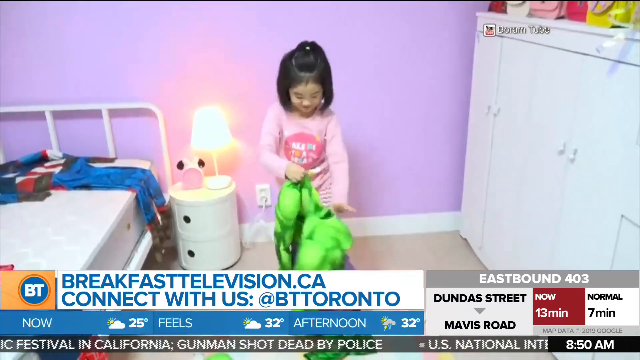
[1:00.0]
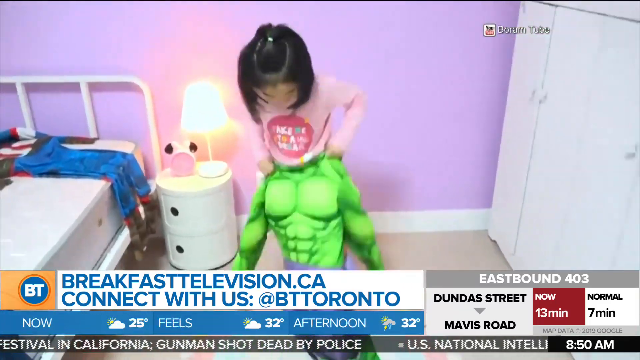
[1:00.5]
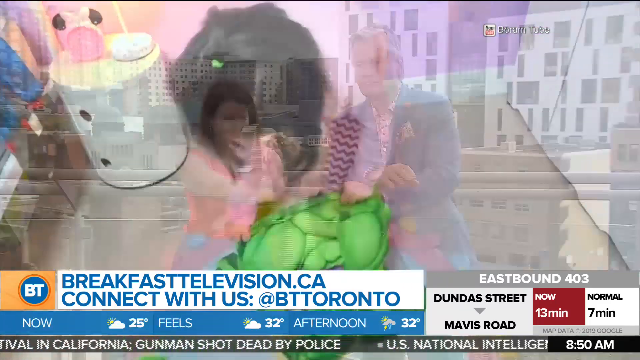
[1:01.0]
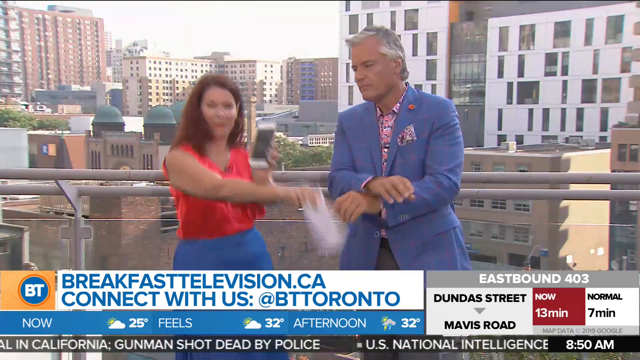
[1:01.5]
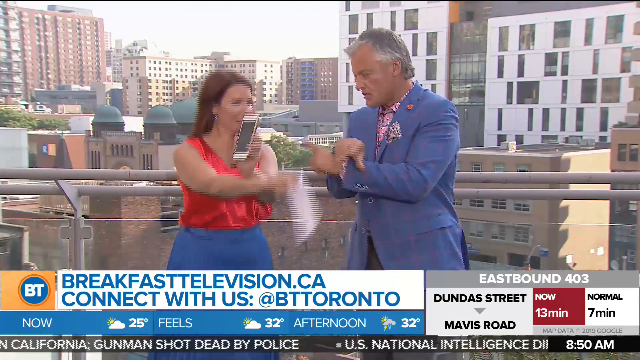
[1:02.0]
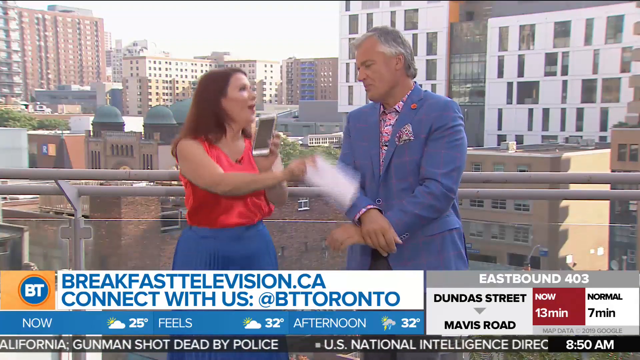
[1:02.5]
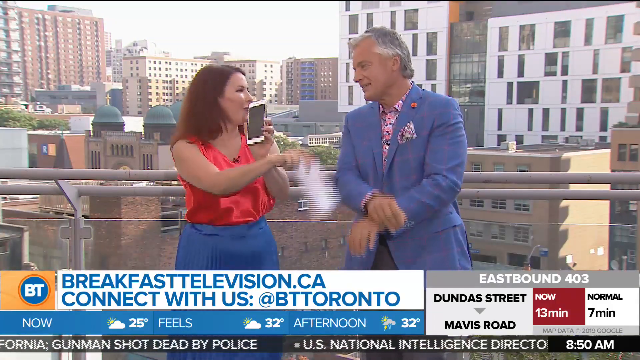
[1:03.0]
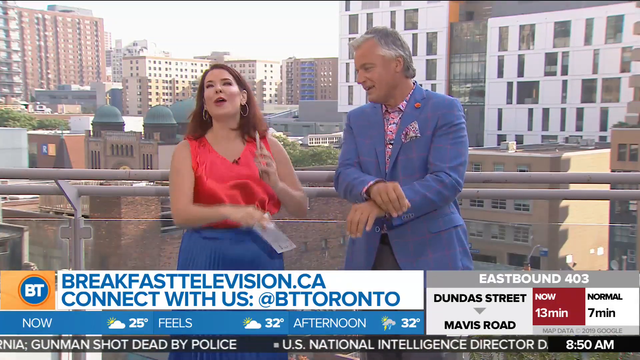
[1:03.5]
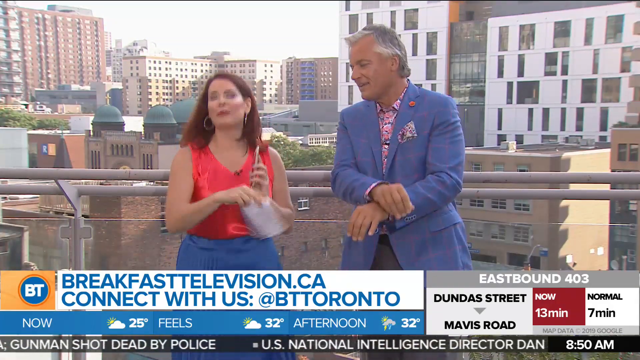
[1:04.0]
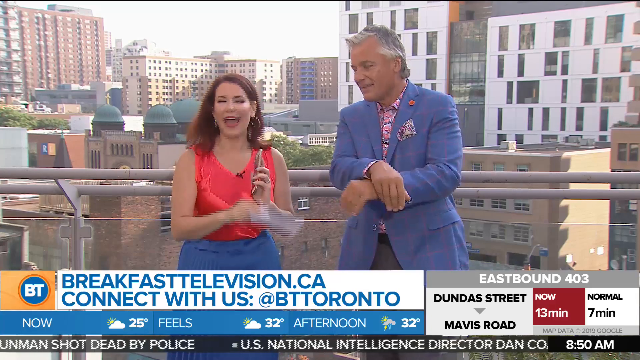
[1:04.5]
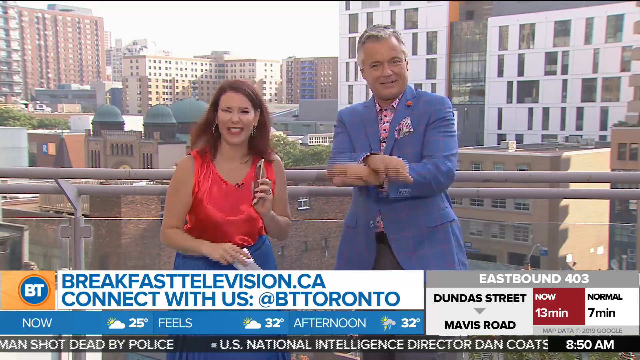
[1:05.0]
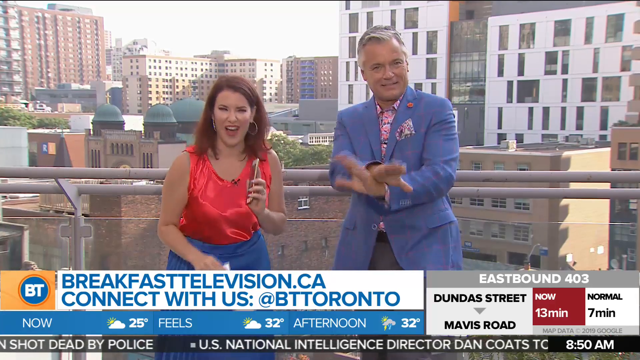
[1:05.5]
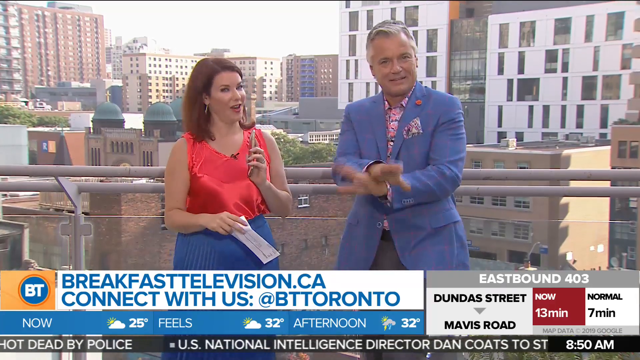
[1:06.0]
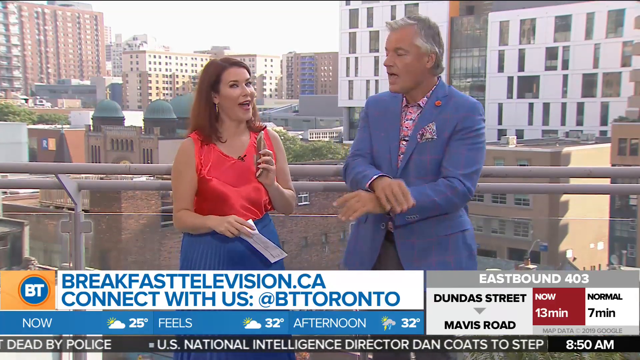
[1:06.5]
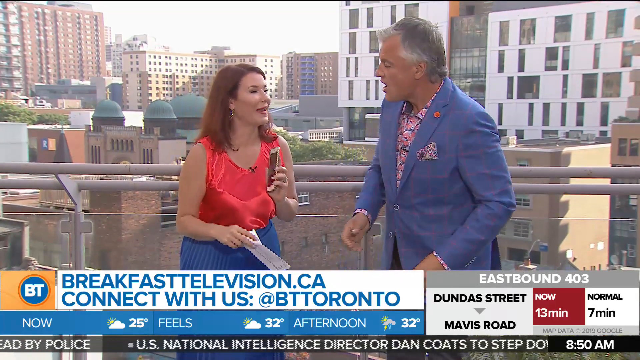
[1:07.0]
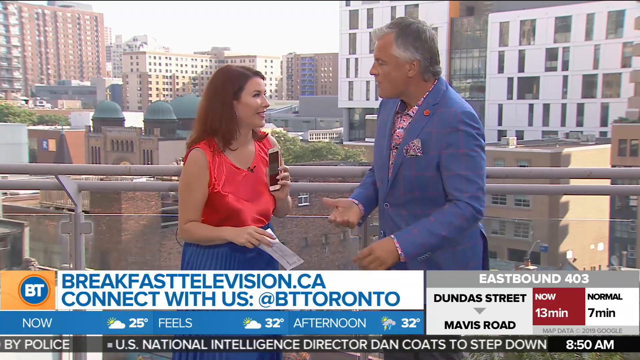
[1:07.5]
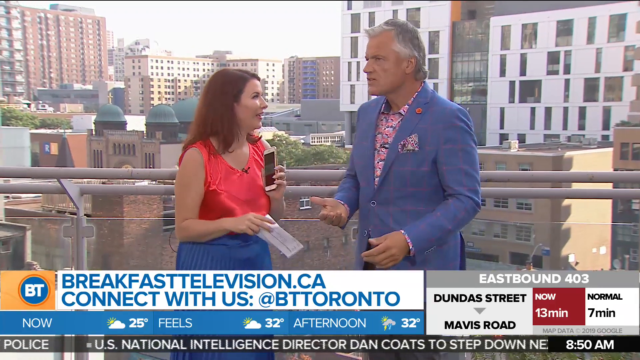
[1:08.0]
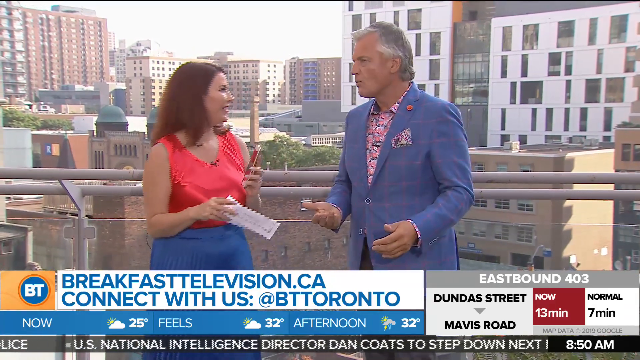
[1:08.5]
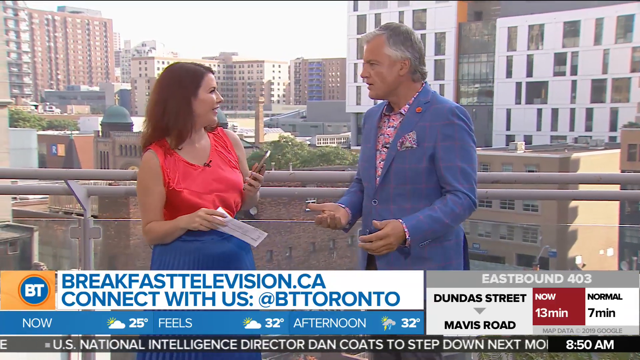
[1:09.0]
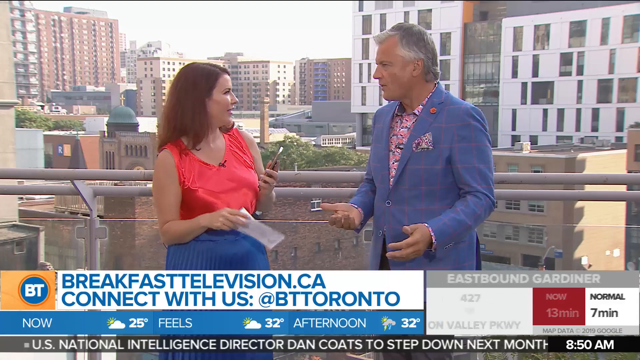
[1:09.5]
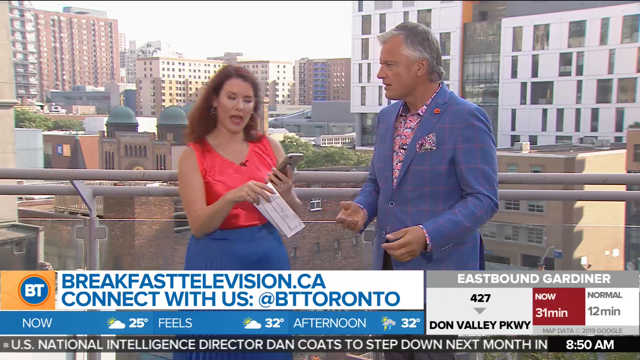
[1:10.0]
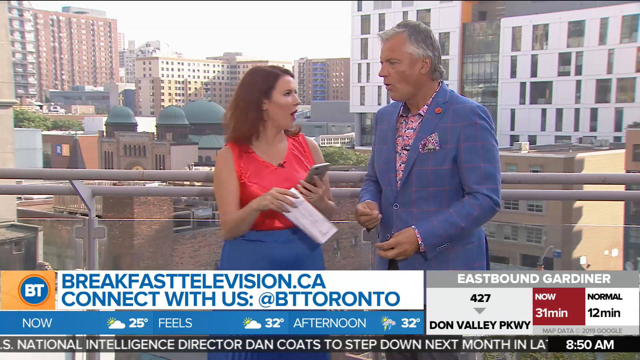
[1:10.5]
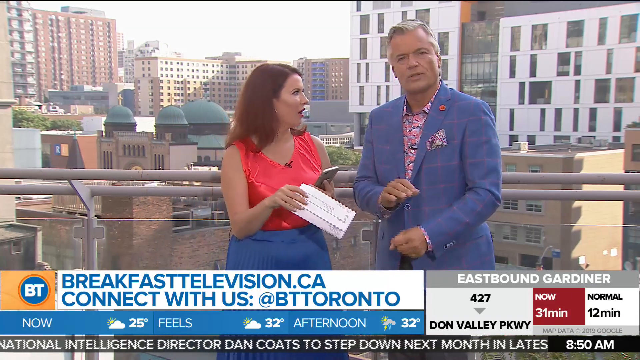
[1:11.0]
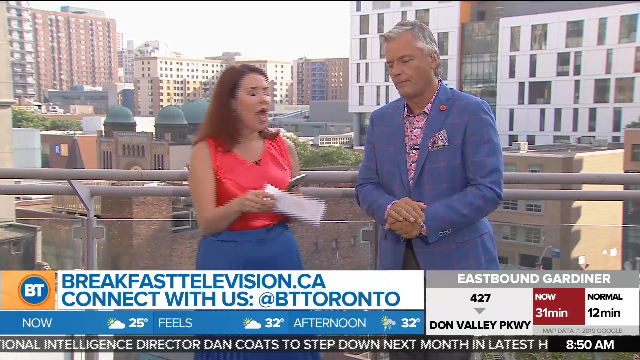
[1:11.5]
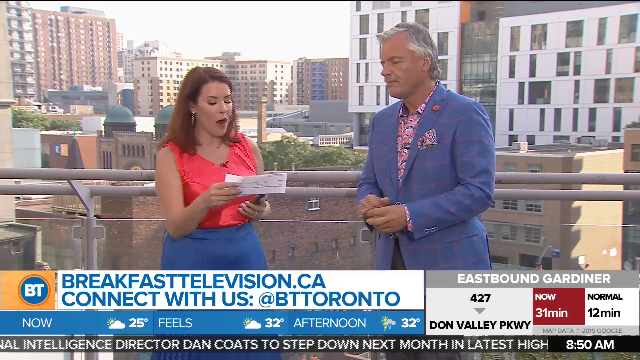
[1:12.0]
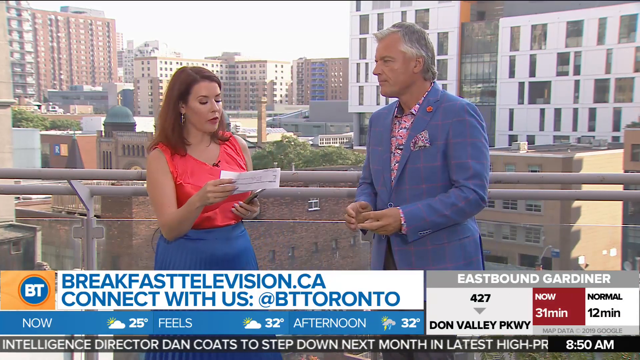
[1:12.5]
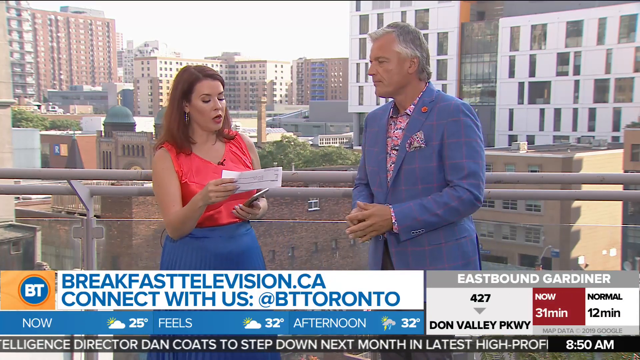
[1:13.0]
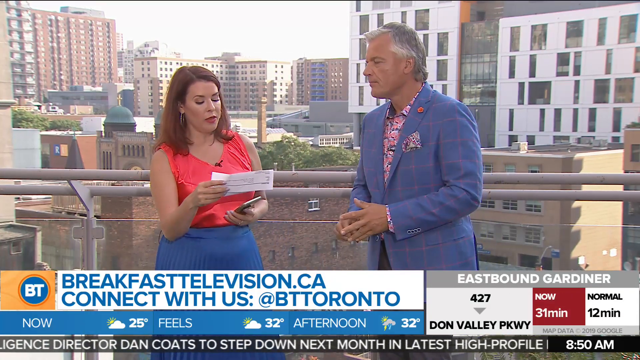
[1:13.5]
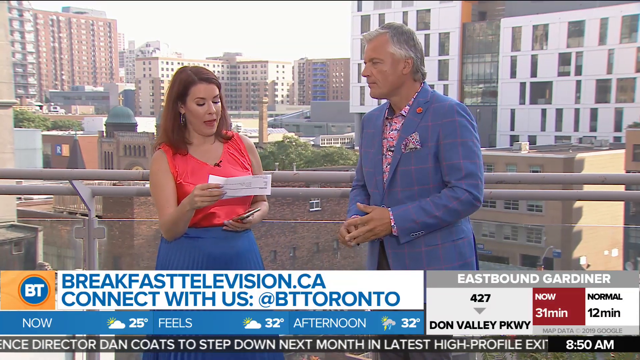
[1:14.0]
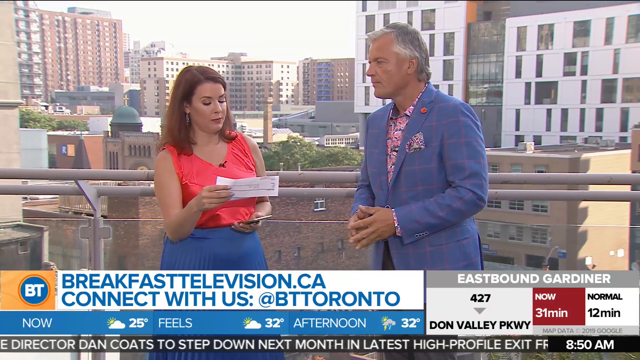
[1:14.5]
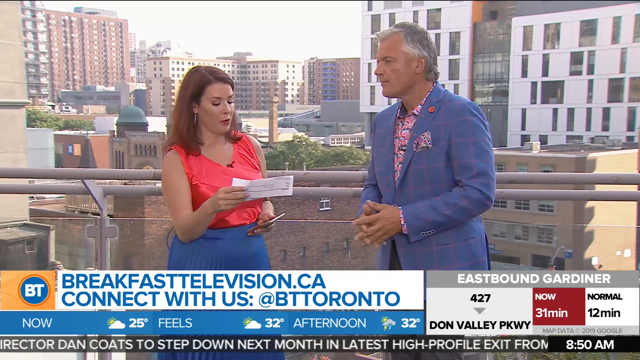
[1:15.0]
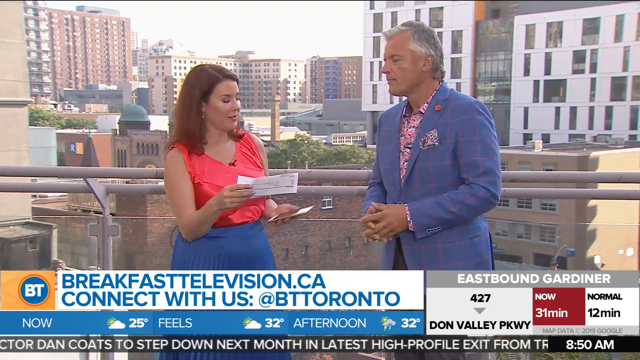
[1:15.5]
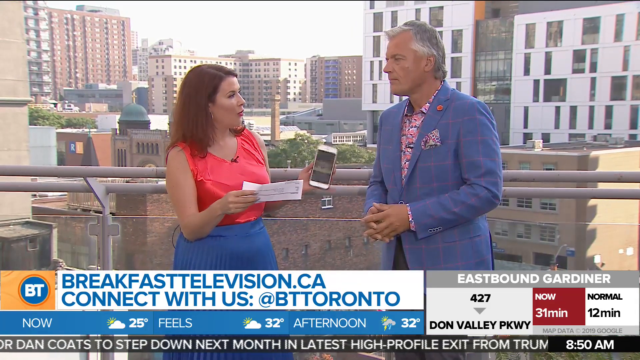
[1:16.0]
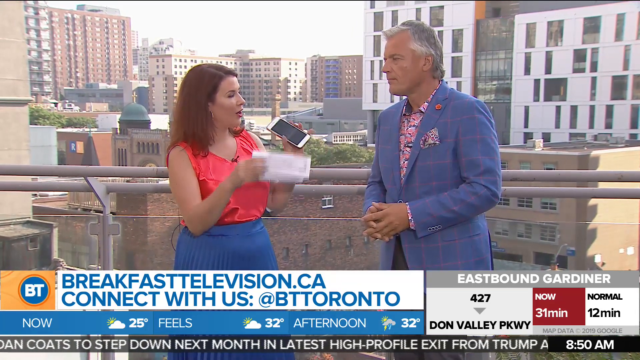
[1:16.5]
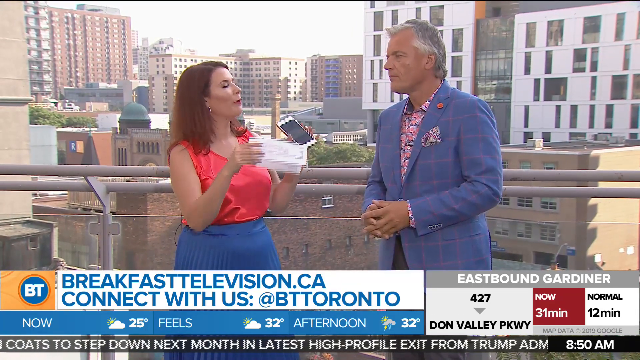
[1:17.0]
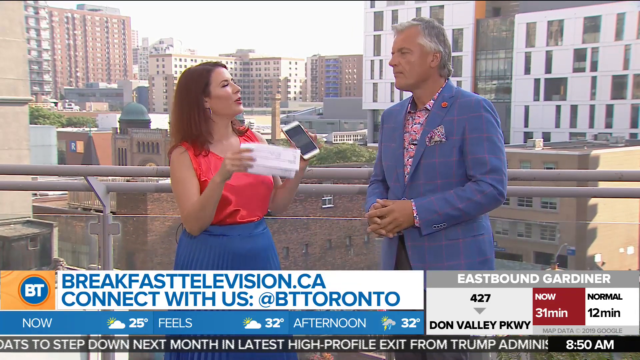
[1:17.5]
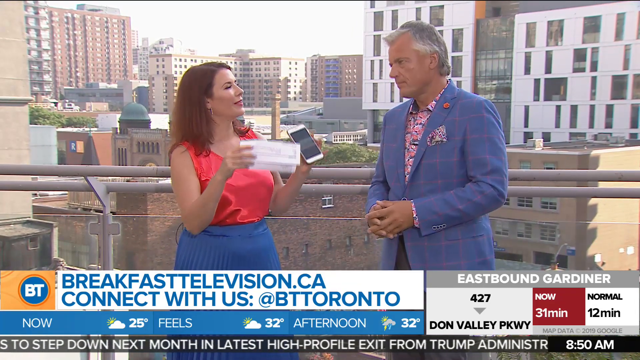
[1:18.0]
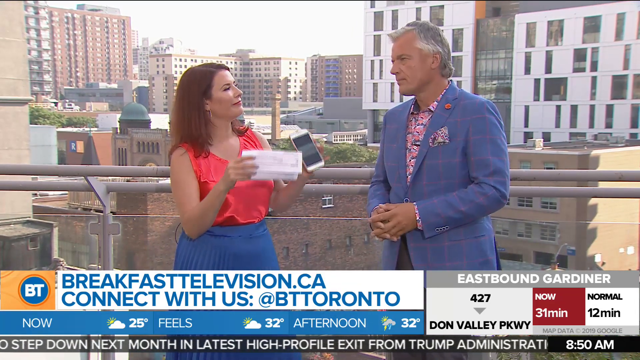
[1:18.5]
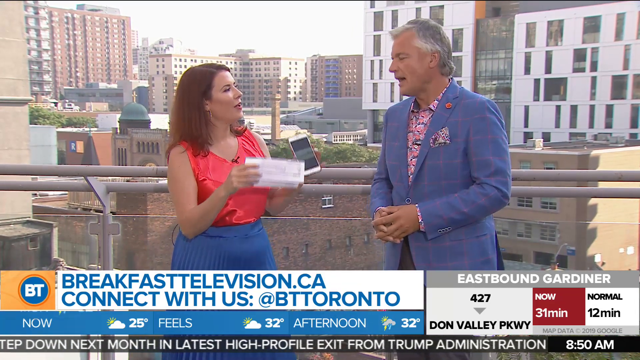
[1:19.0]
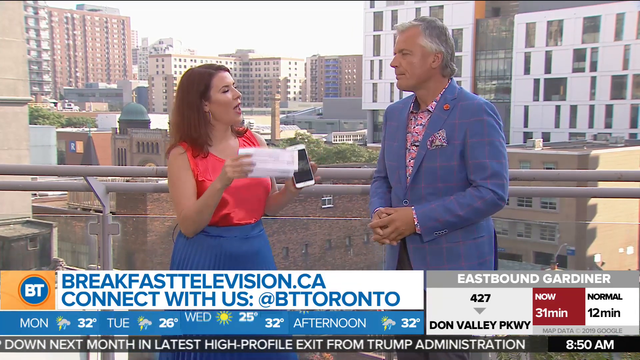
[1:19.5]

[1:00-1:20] The girl continues putting on her costume in footage sped up to twice the speed for a humorous look. The video cuts to the two hosts back outside on the rooftop or balcony, dancing together. The female host holds a mobile phone, waving it and holding it forward as if something is playing on it that they are dancing to. They laugh and smile, then continue talking while moving as if dancing but not quite dancing. The weather on the ticker shows 32 degrees in the afternoon, and the hosts are dressed in summer-style clothing.